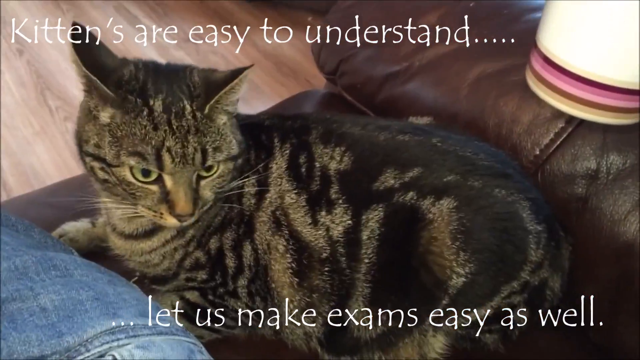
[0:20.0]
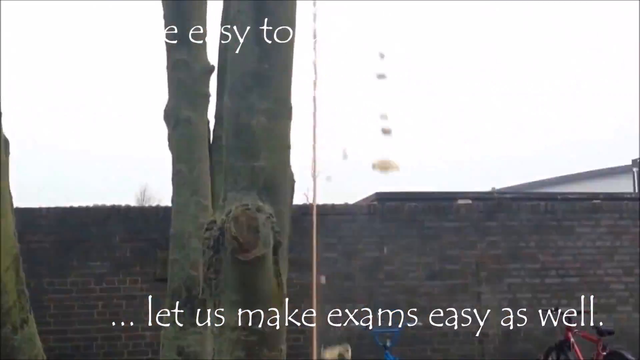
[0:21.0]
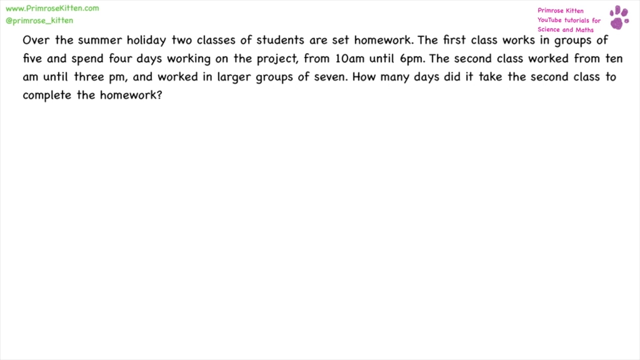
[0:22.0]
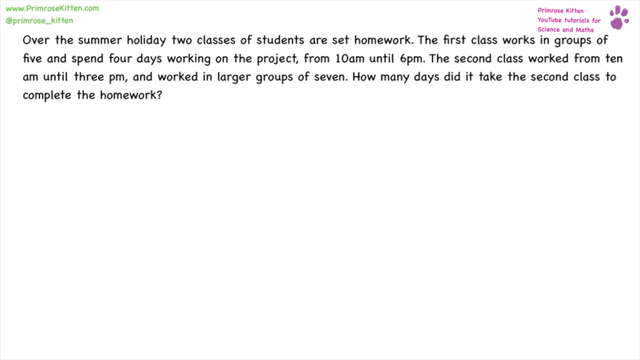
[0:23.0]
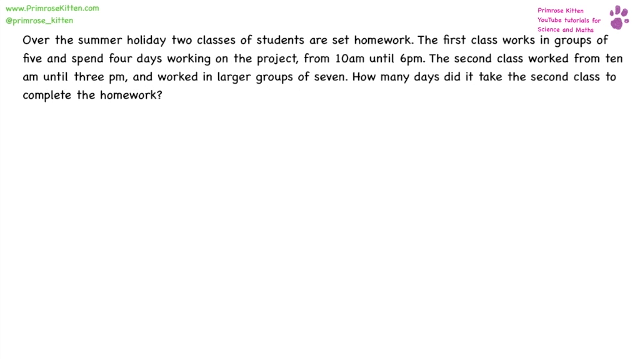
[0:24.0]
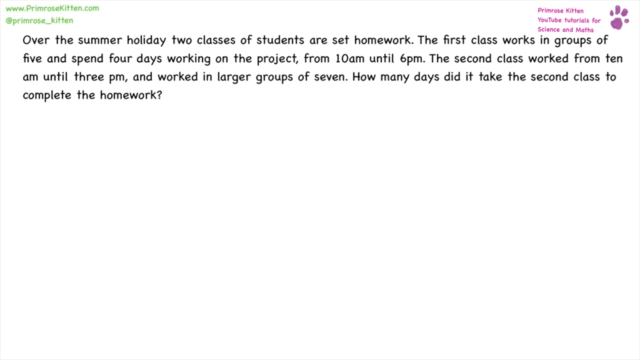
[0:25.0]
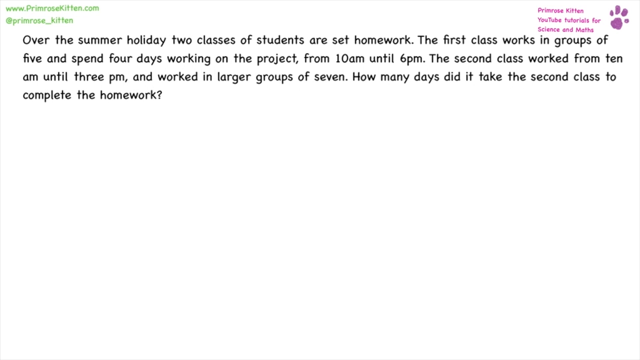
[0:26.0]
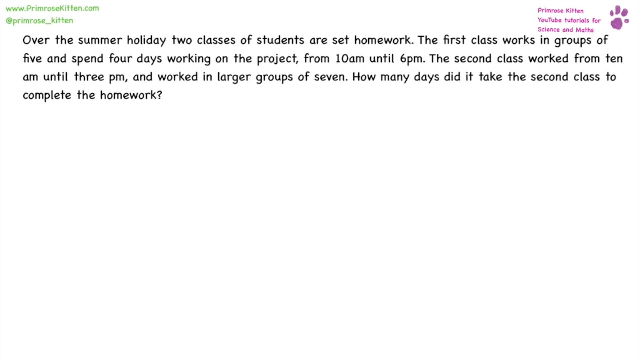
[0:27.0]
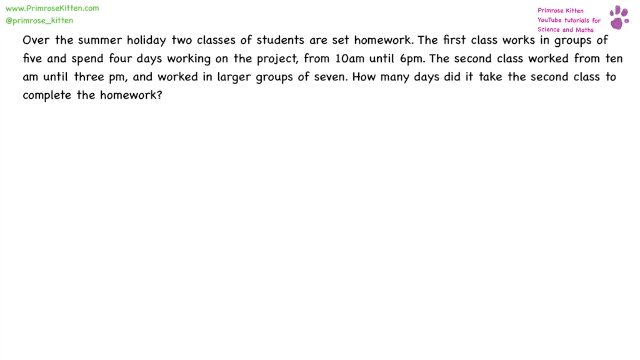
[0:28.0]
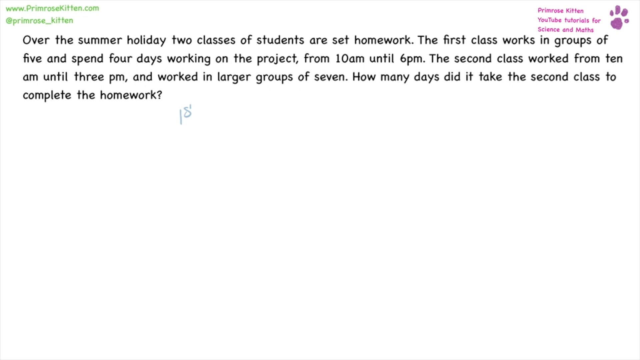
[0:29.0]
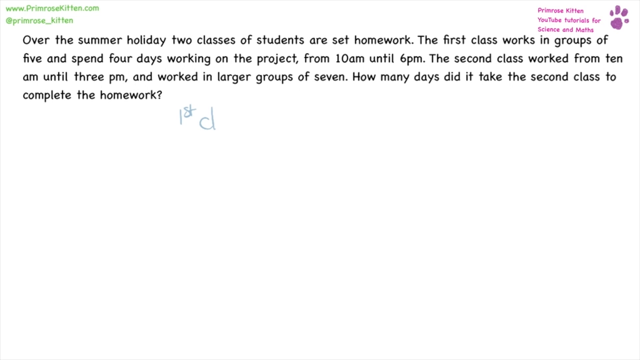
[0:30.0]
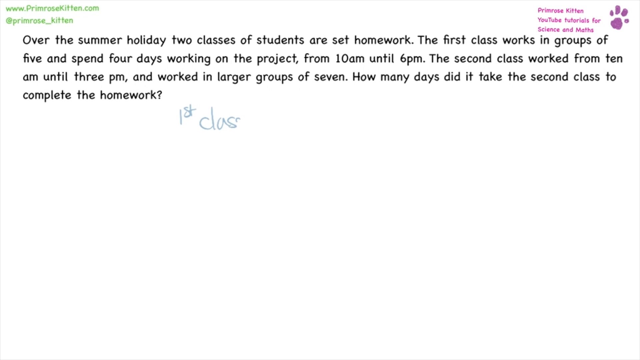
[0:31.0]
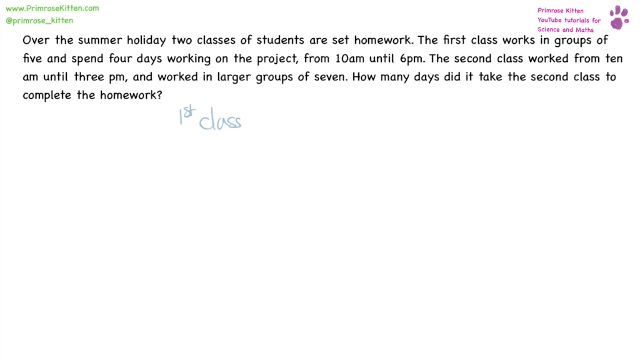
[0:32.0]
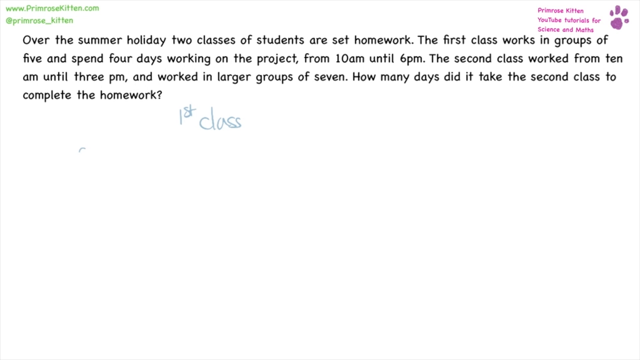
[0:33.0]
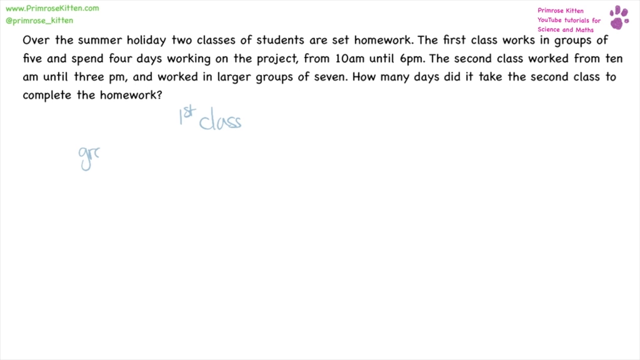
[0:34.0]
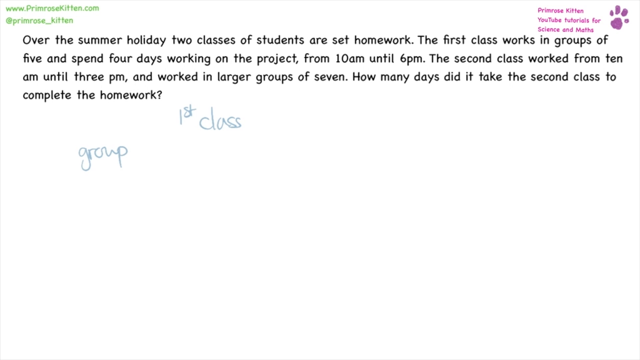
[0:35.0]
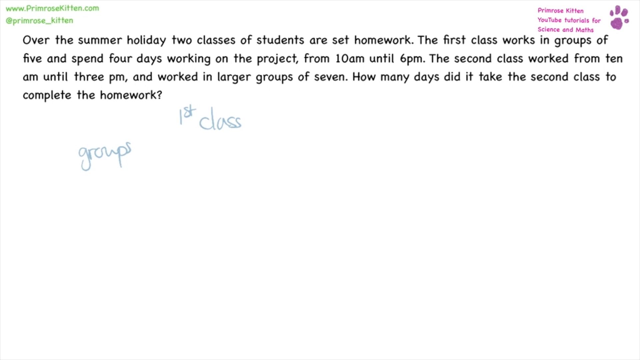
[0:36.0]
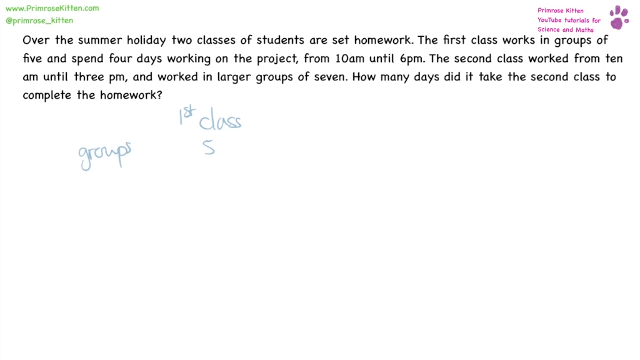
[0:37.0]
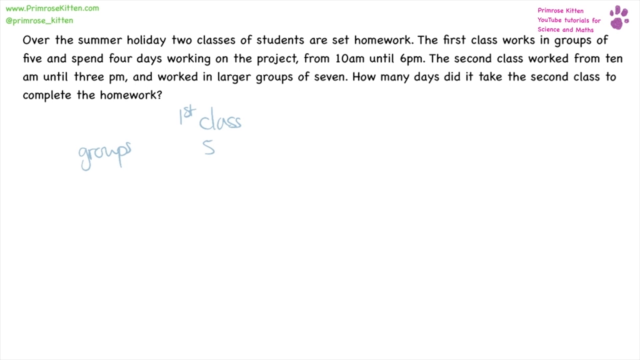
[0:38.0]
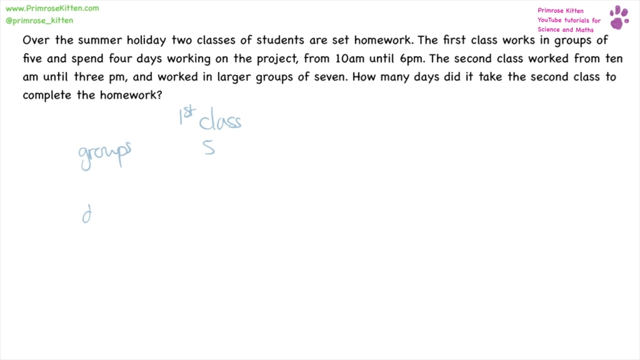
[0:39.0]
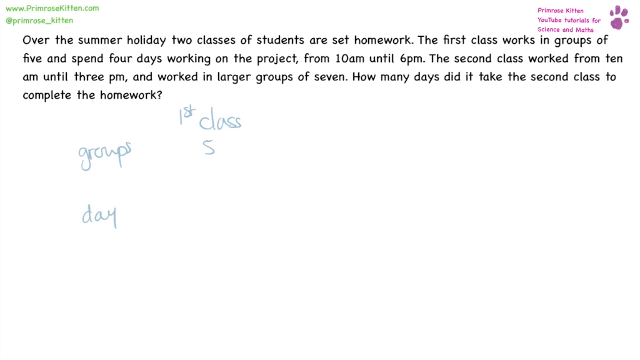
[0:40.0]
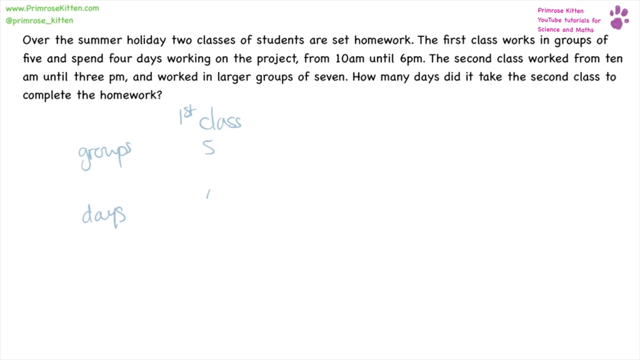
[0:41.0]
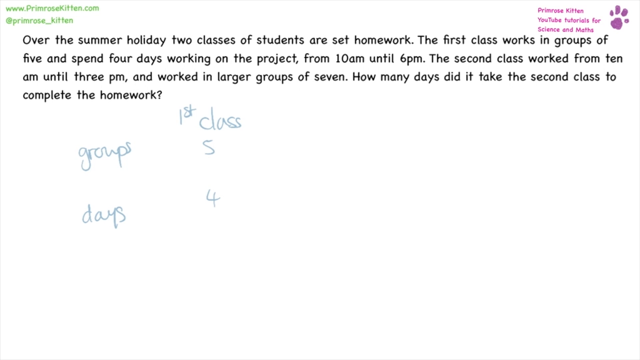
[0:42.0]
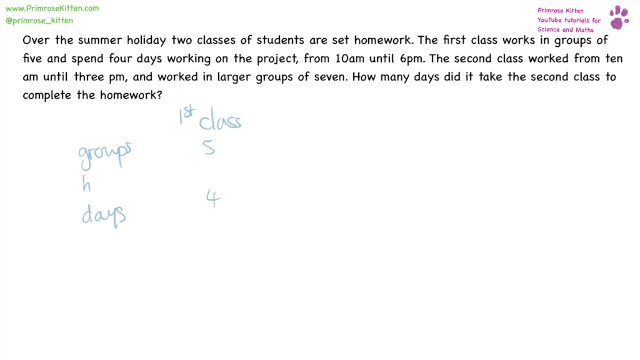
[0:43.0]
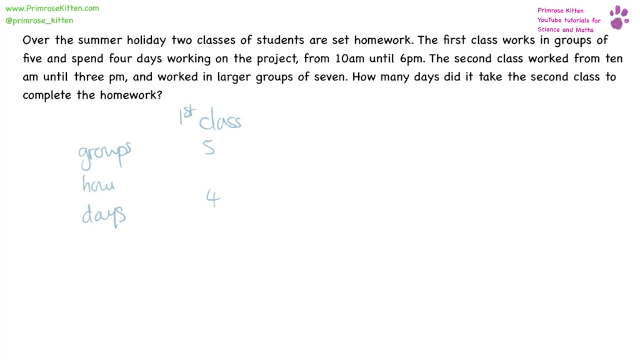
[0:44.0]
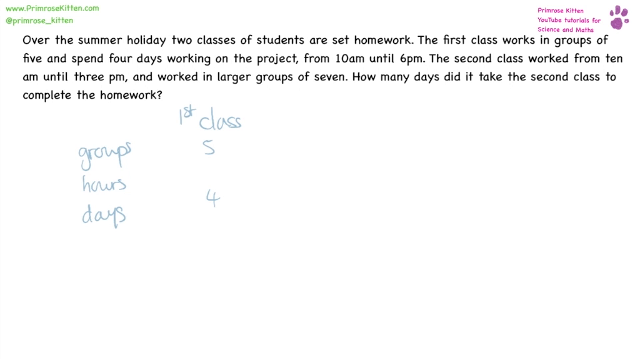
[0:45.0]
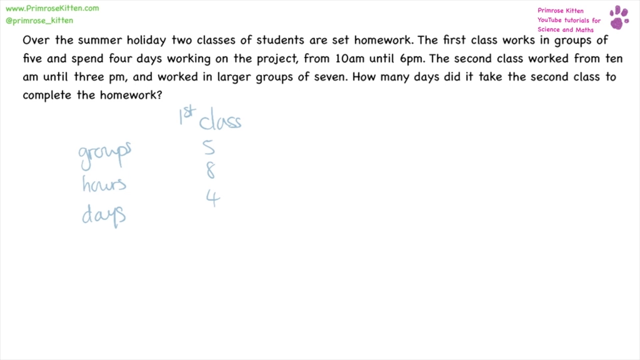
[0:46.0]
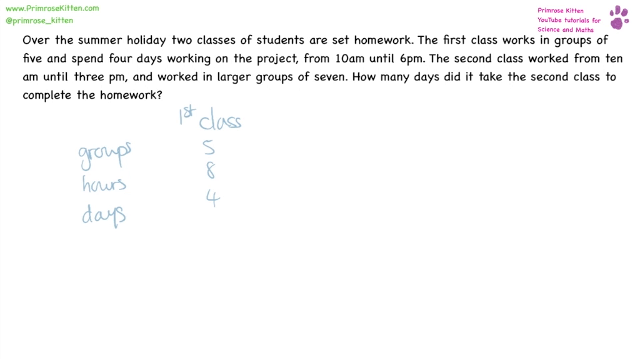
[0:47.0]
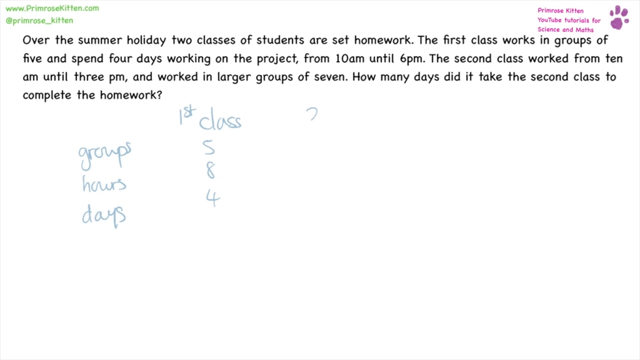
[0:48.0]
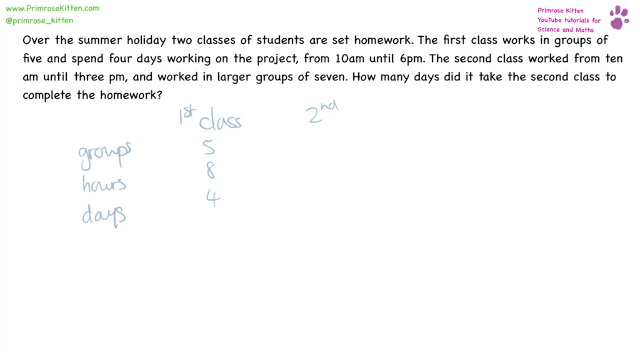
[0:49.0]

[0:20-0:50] A brown and black cat is on a couch. White text appears that reads "kittens are easy to understand". A fire is also shown, and the video looks fast-forwarded, moving quickly through a cat, a fire, and a tree outside. Then a small paragraph in black, small letters appears, including times in numbers. It begins "Over the summer holidays, two classes of students" and describes a word problem: the first class works in a group of five and spends four days on the project from 10 a.m. until 6 p.m., while the second class works in a larger group of seven, and it asks how many days the second class takes to complete the homework.